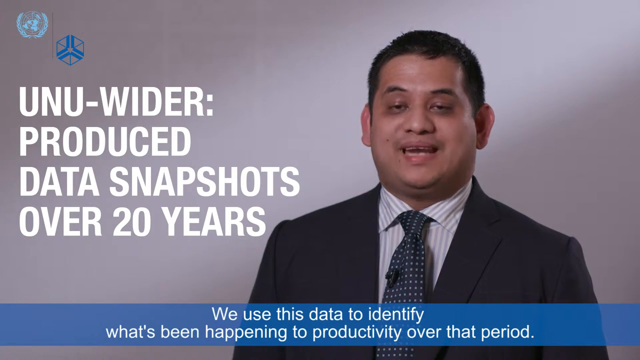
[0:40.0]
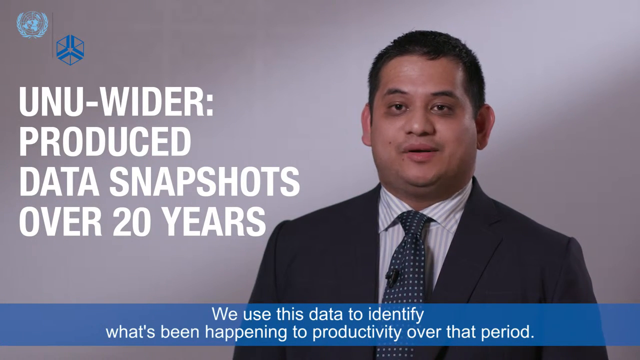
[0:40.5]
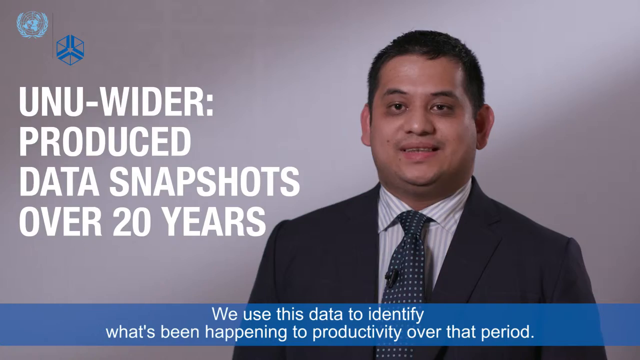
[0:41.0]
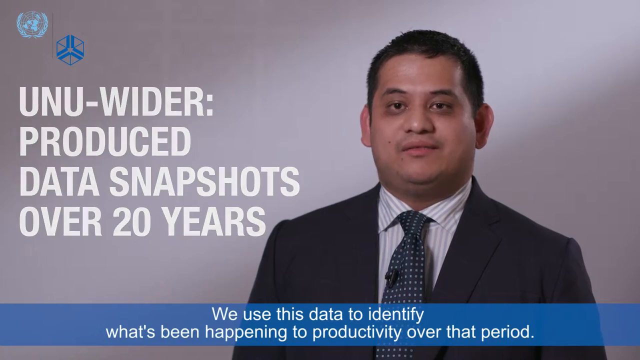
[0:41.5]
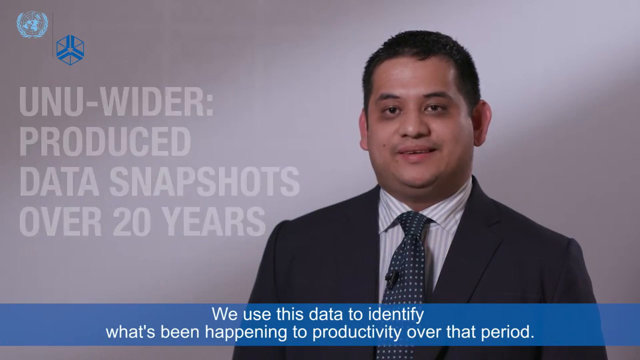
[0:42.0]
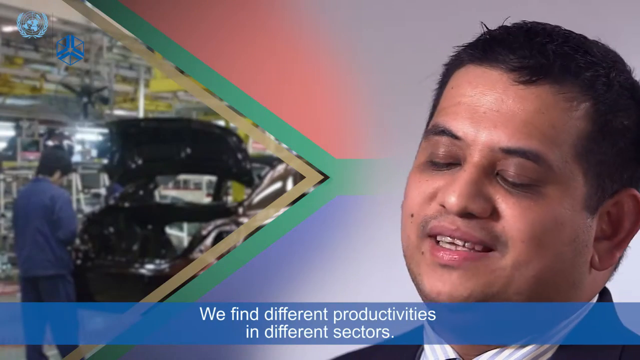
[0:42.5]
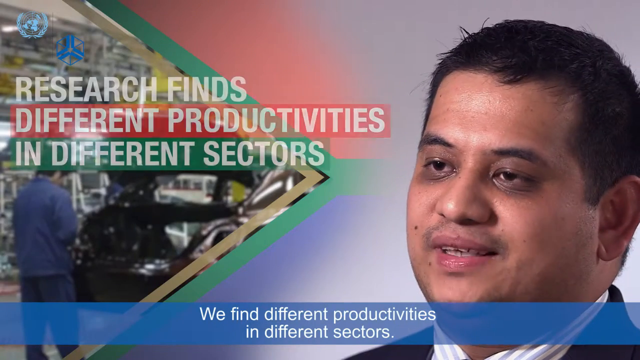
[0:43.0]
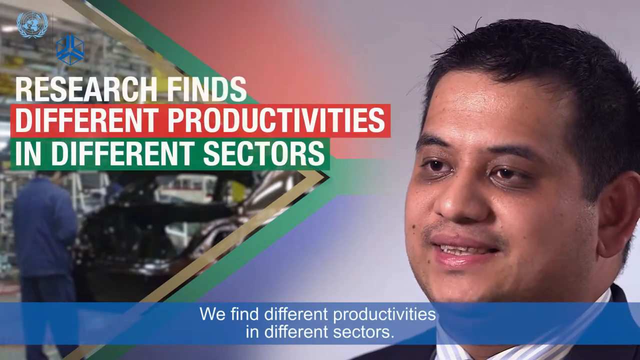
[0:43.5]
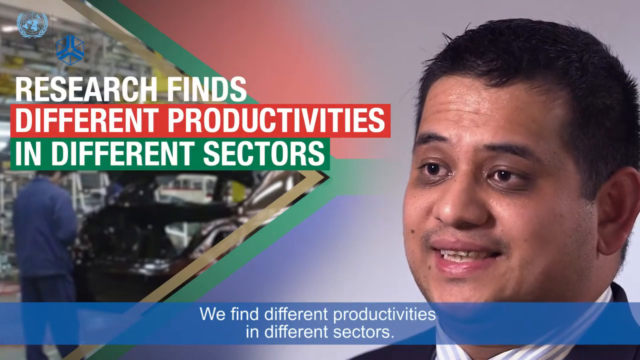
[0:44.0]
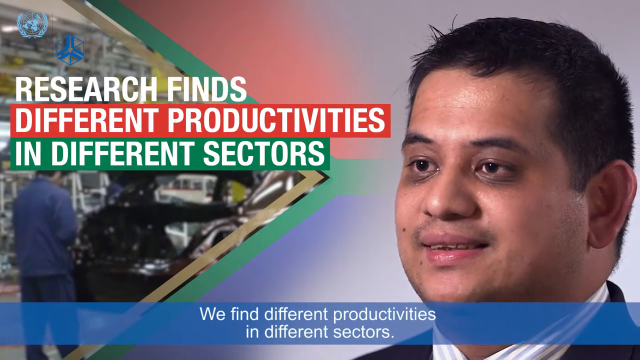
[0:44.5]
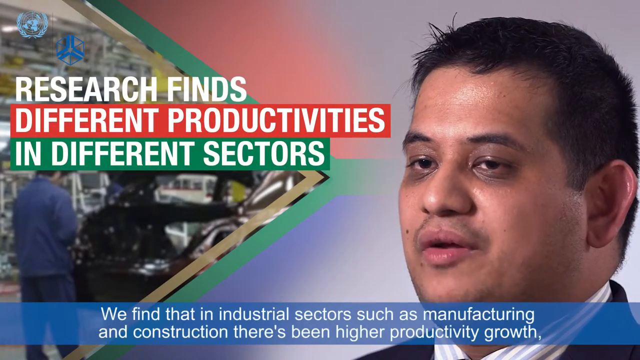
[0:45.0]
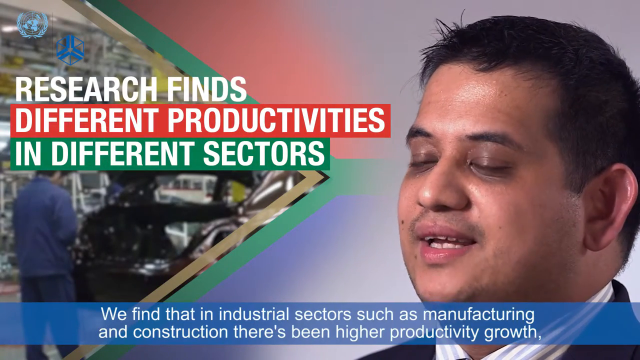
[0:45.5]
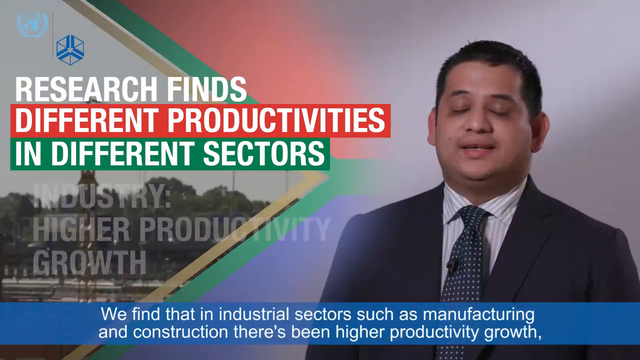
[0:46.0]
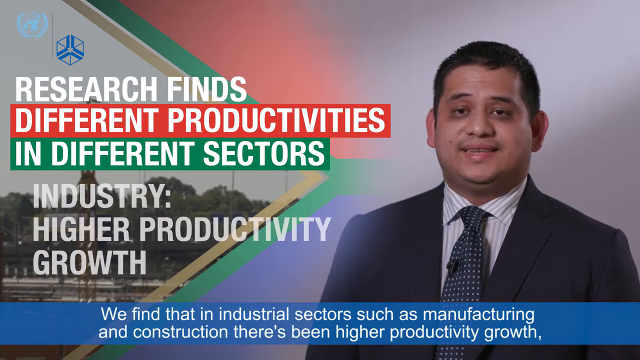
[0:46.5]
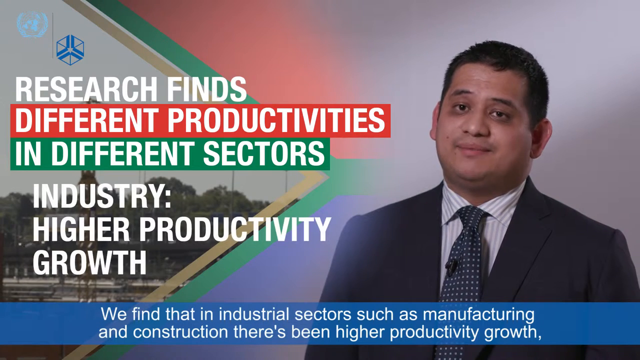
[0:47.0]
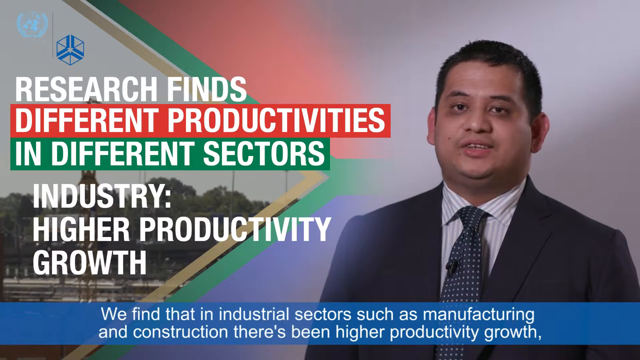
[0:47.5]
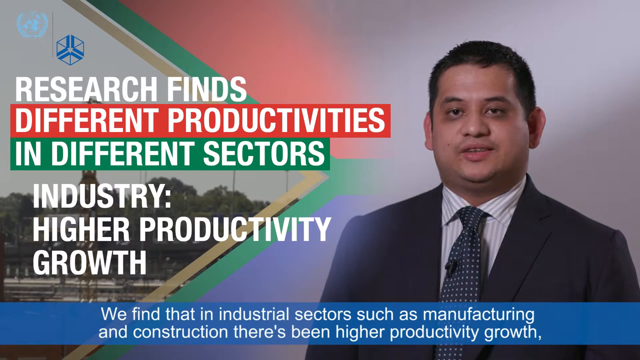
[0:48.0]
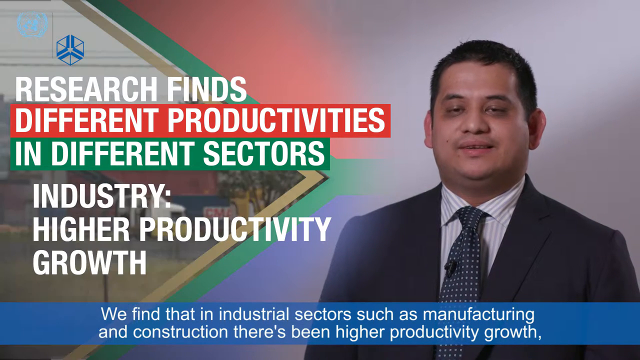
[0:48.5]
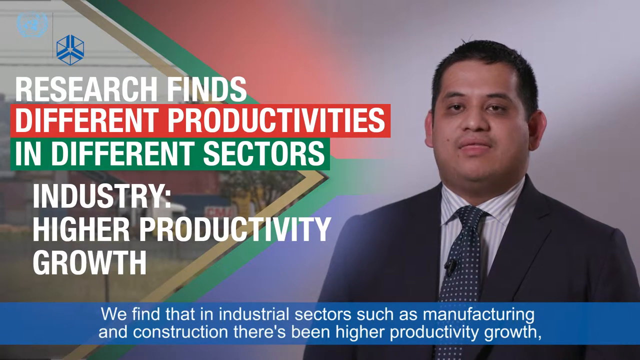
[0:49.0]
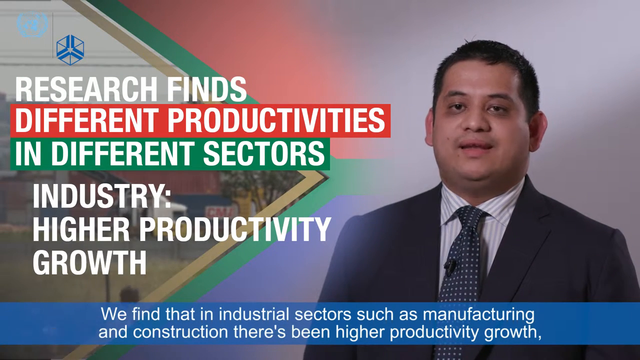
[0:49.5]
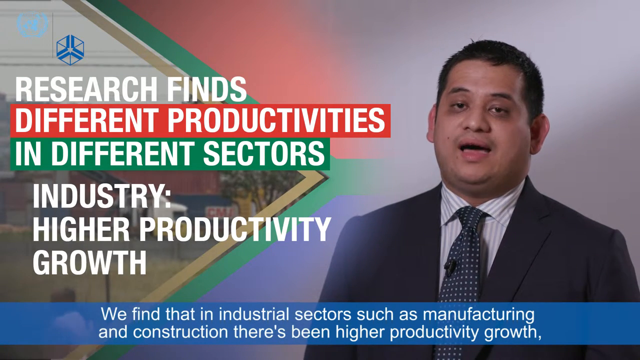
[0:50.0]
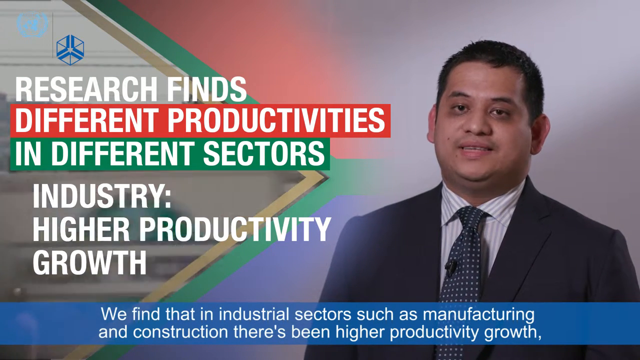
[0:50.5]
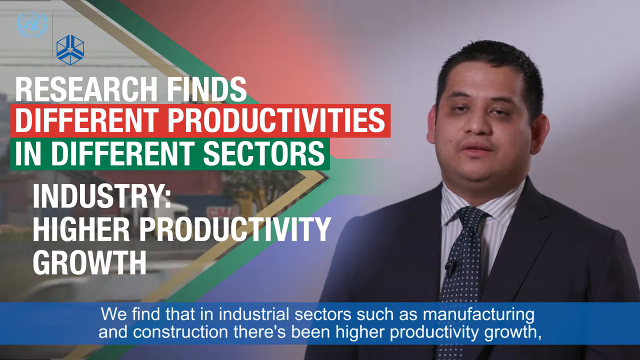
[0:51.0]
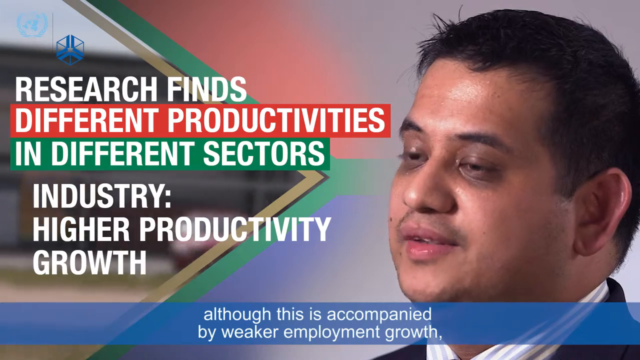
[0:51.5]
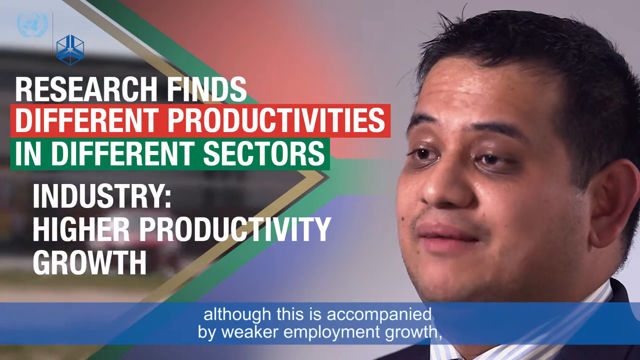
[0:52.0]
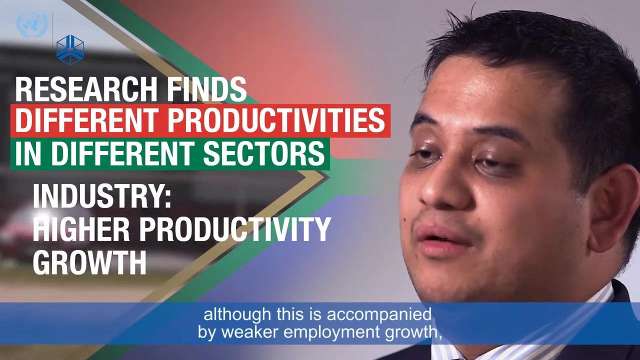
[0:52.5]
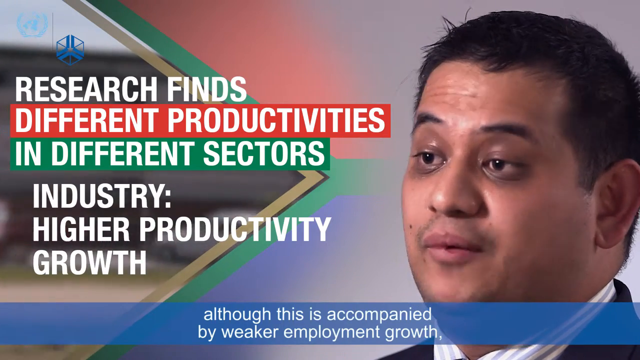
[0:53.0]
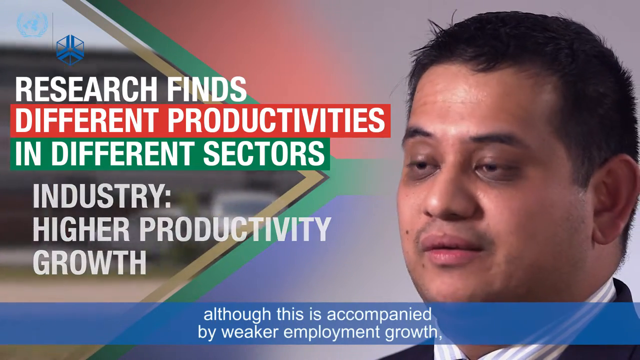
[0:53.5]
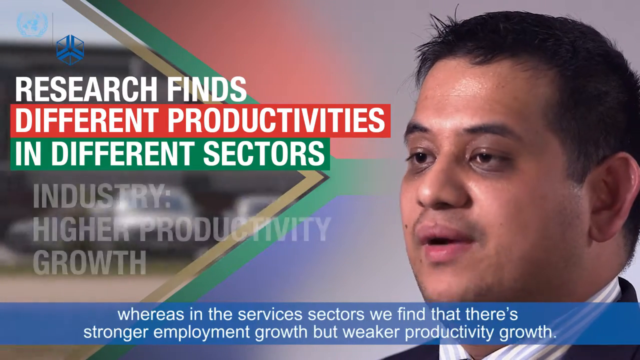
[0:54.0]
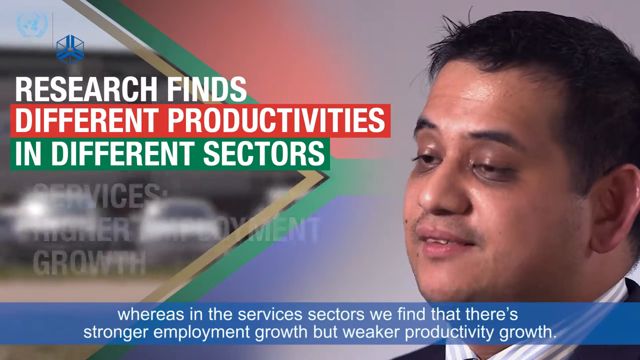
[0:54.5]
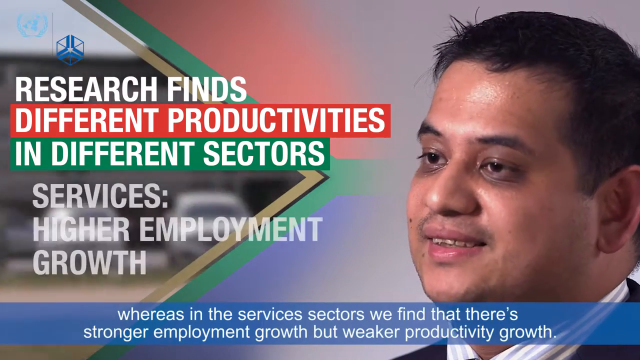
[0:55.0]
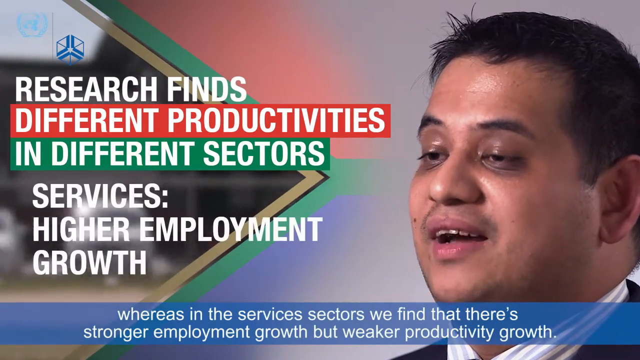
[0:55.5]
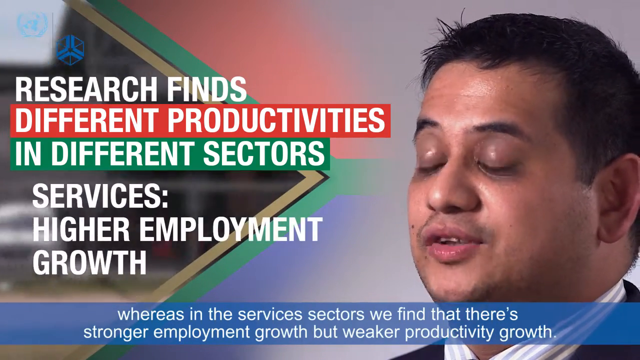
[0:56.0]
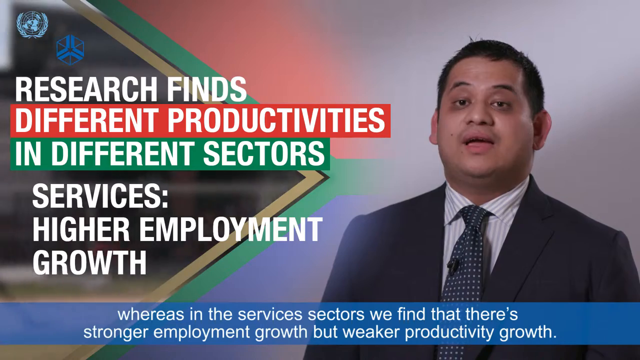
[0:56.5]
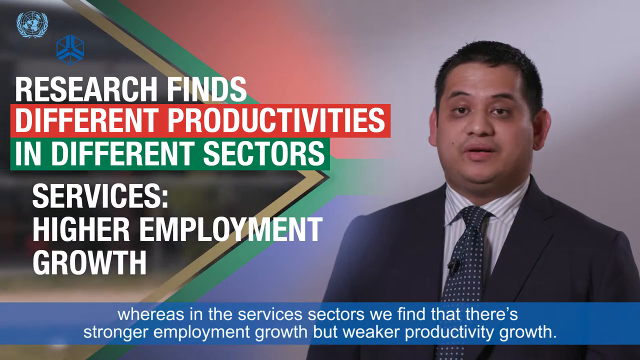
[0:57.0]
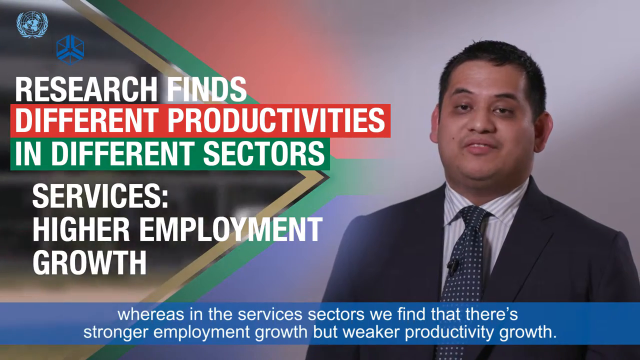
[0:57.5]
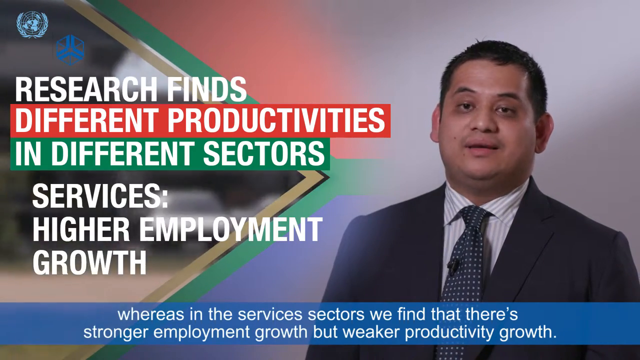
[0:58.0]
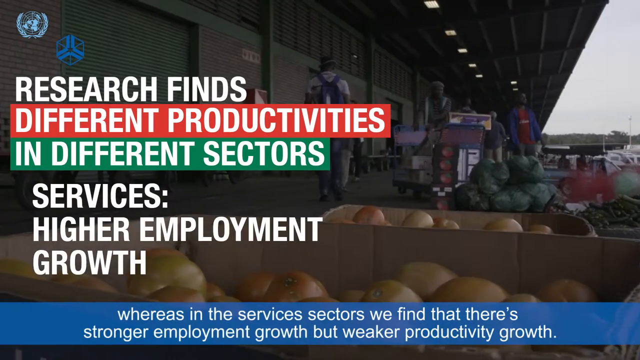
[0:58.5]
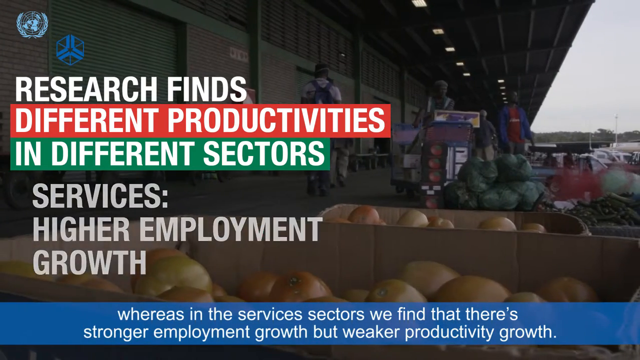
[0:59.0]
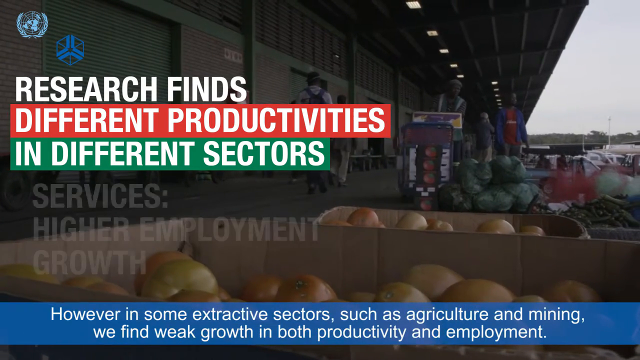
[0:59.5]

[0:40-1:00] The presenter continues speaking while the footage behind him shows an outdoor market stall, along with construction sites.